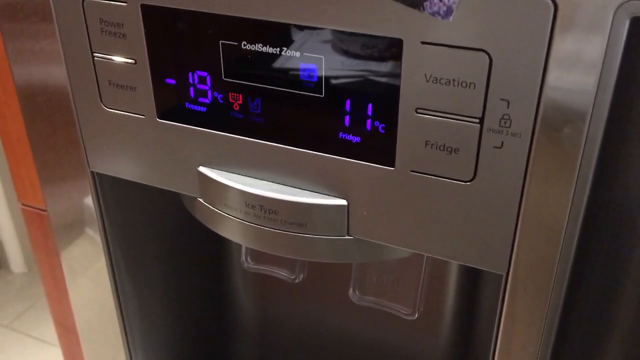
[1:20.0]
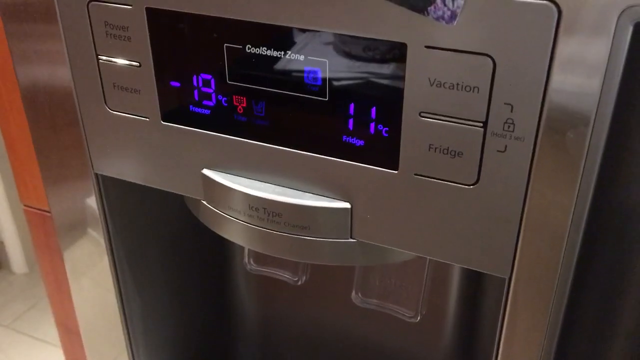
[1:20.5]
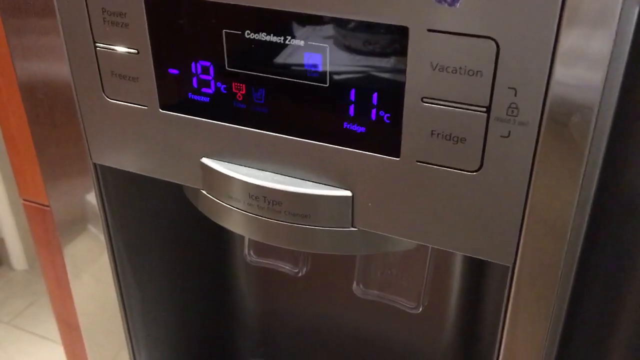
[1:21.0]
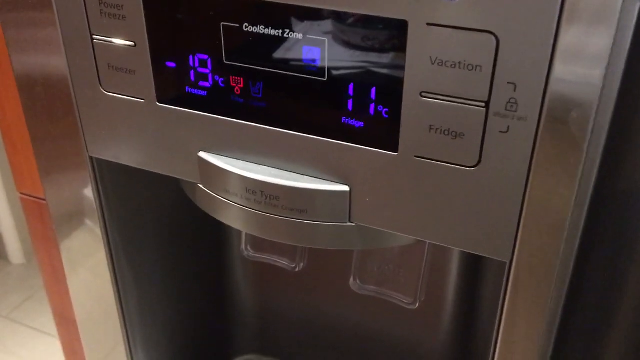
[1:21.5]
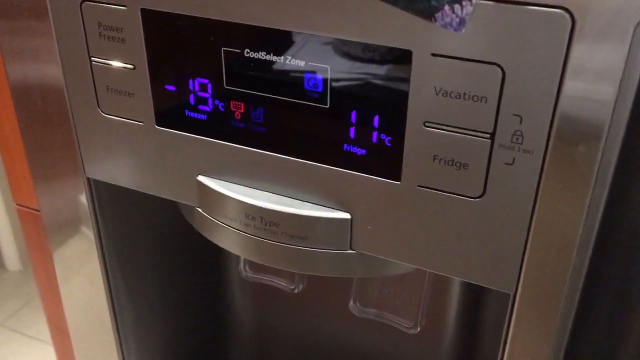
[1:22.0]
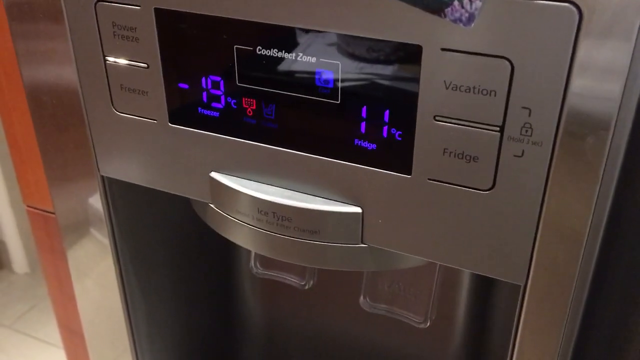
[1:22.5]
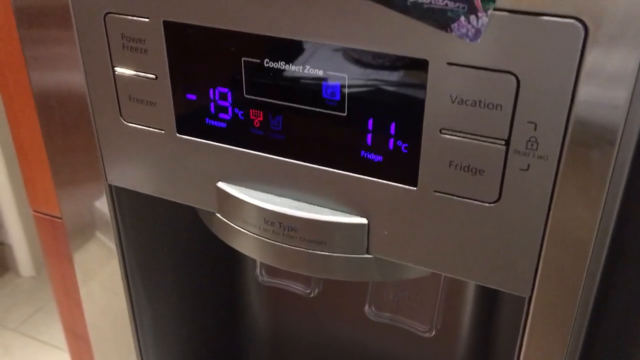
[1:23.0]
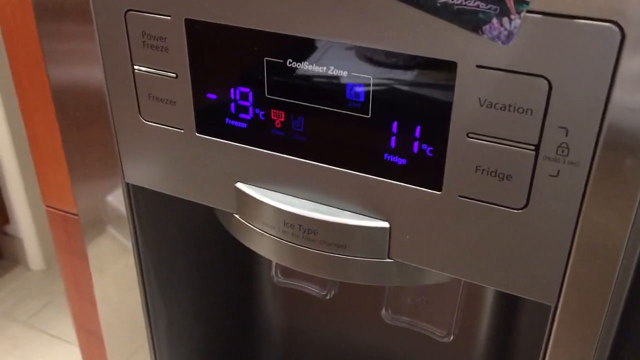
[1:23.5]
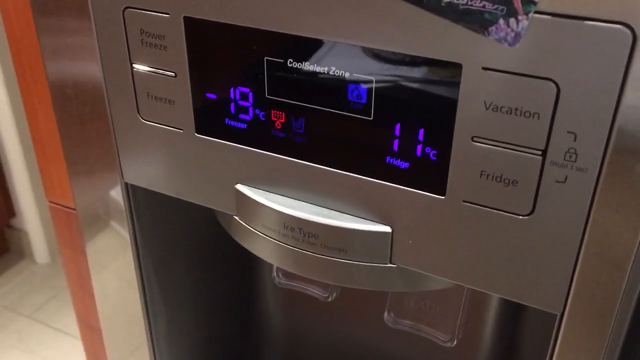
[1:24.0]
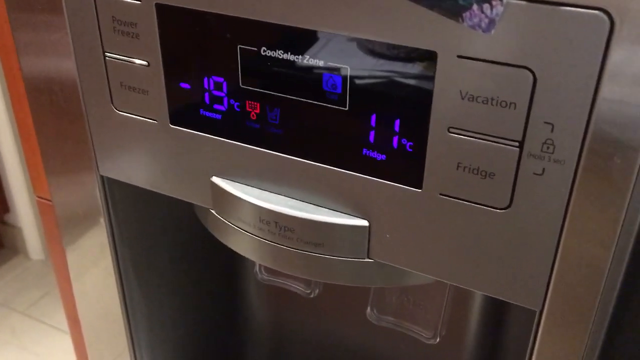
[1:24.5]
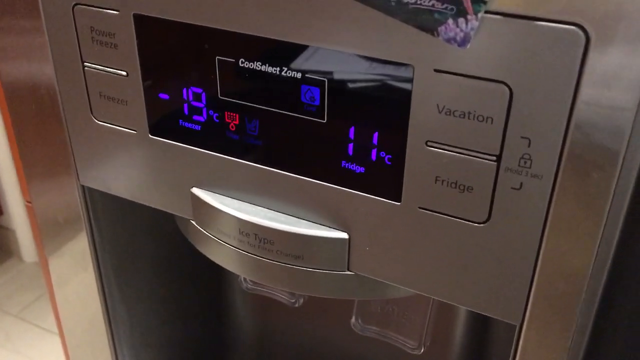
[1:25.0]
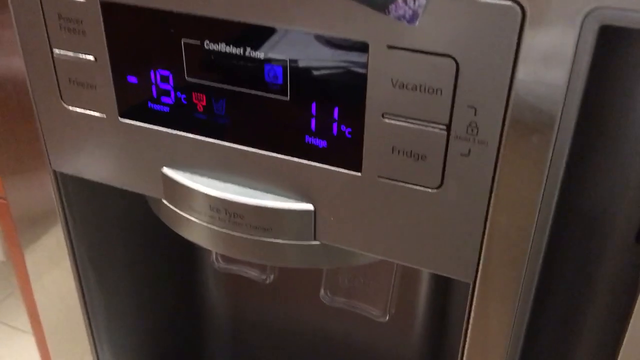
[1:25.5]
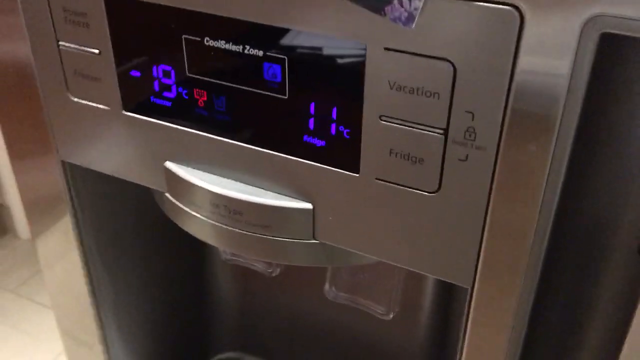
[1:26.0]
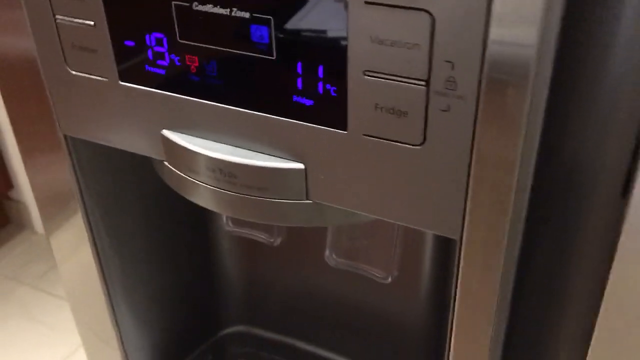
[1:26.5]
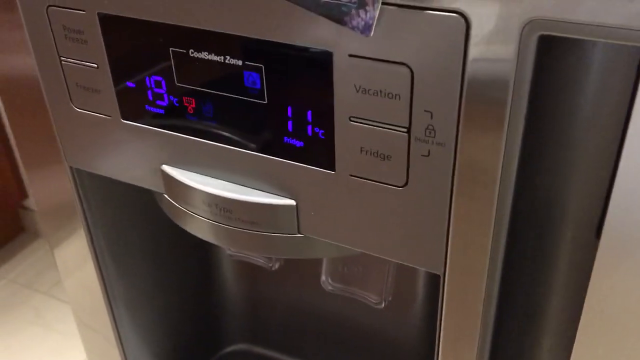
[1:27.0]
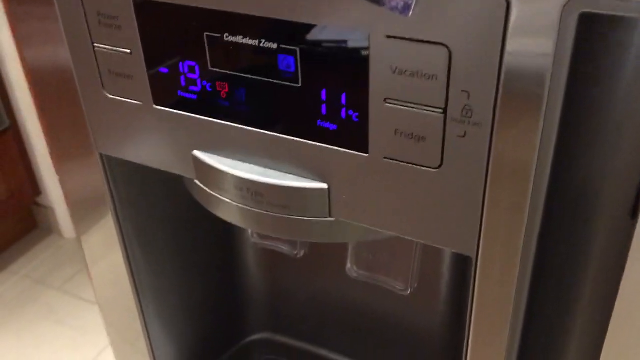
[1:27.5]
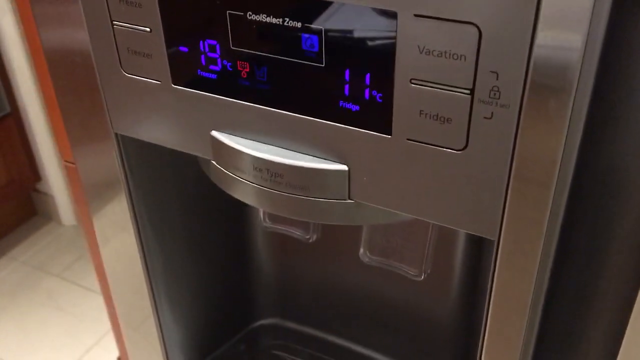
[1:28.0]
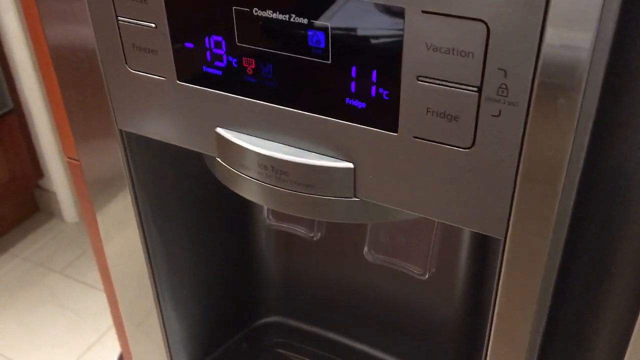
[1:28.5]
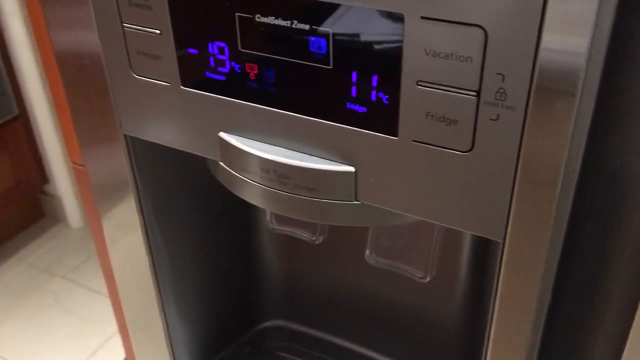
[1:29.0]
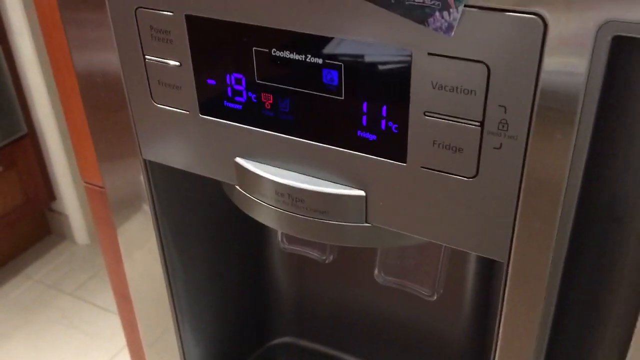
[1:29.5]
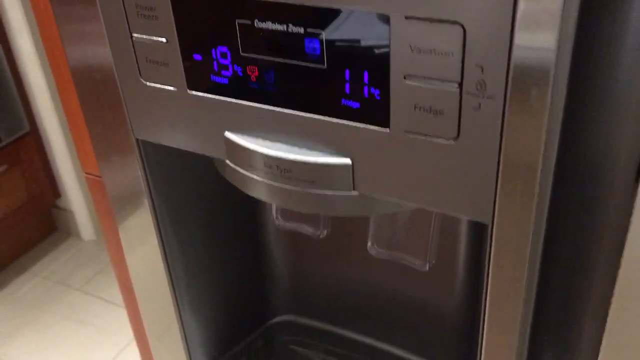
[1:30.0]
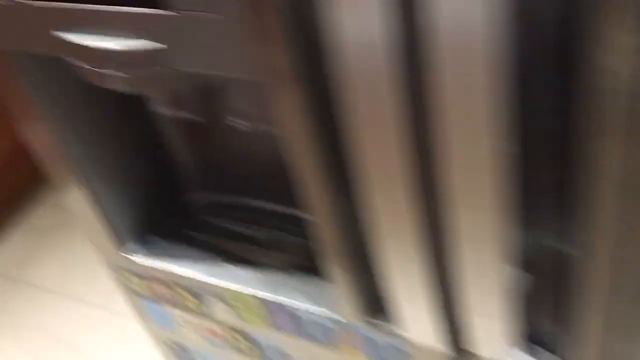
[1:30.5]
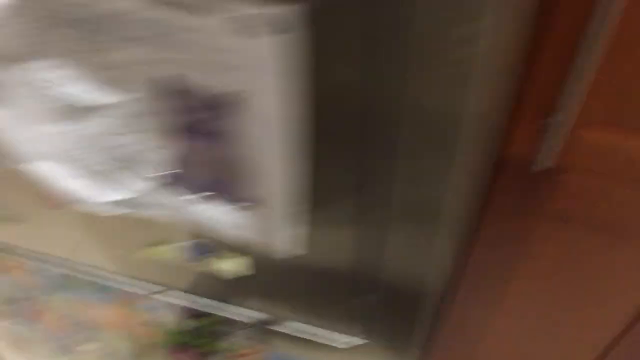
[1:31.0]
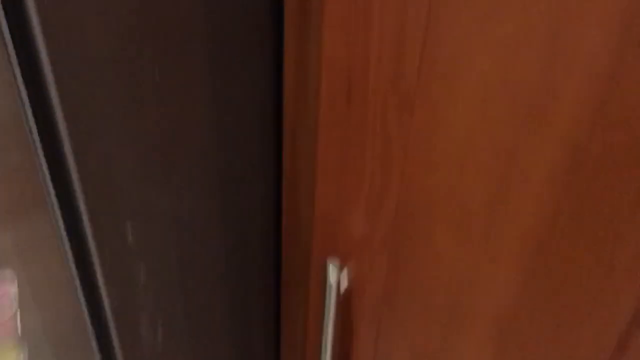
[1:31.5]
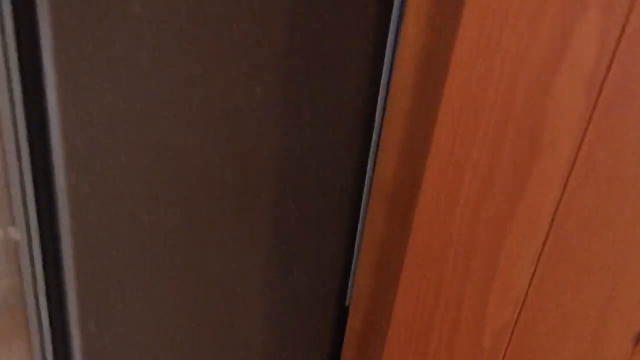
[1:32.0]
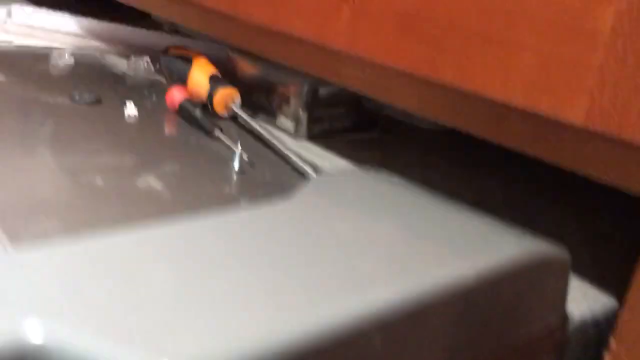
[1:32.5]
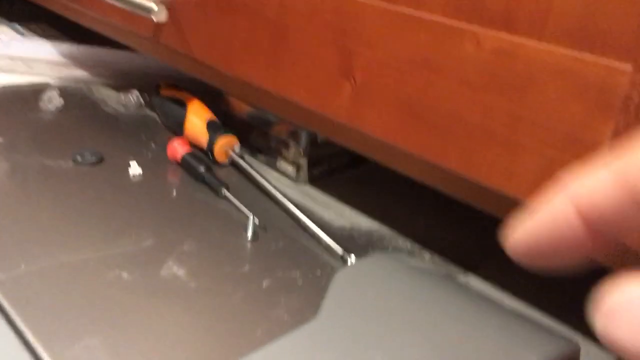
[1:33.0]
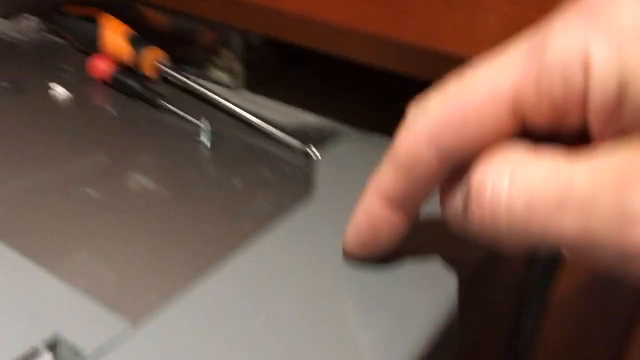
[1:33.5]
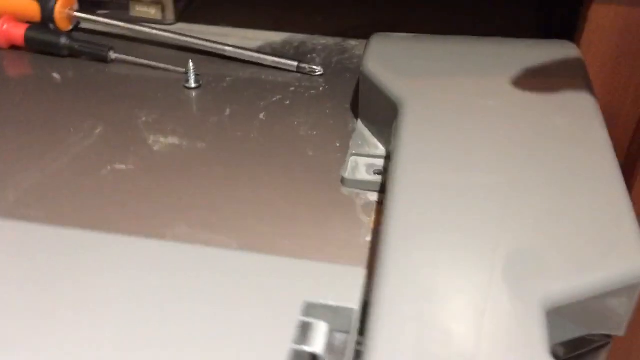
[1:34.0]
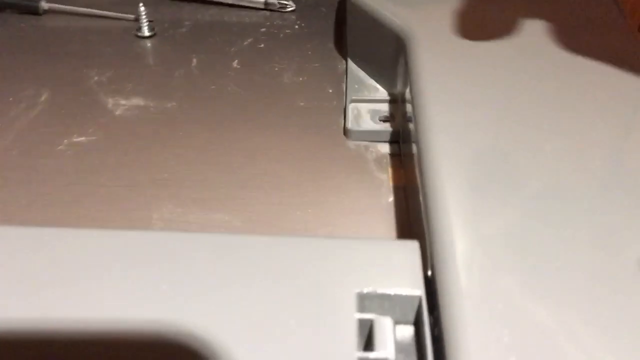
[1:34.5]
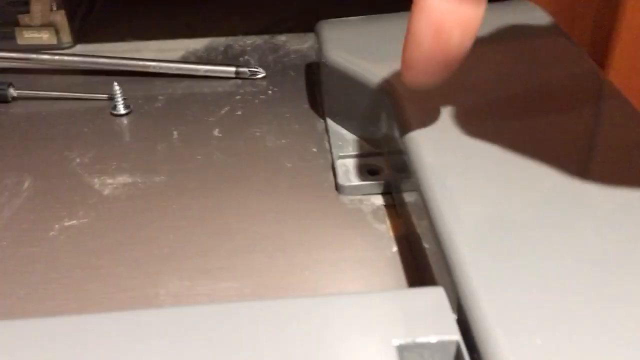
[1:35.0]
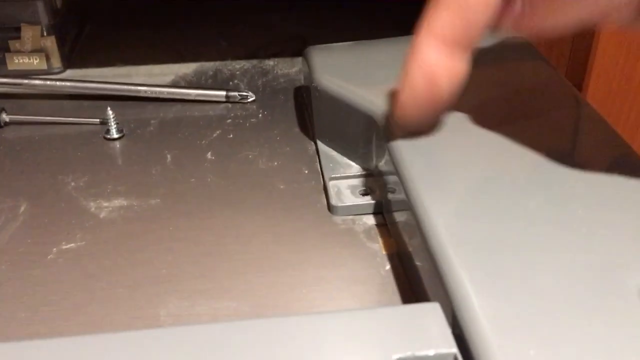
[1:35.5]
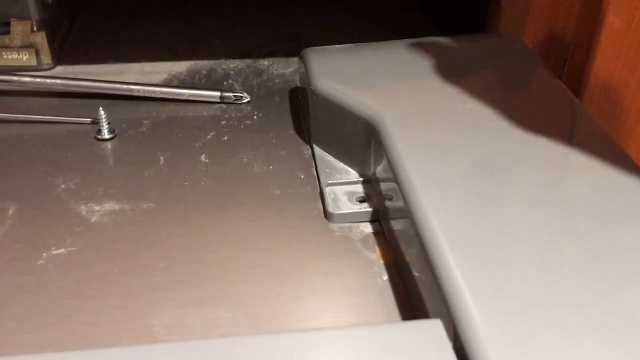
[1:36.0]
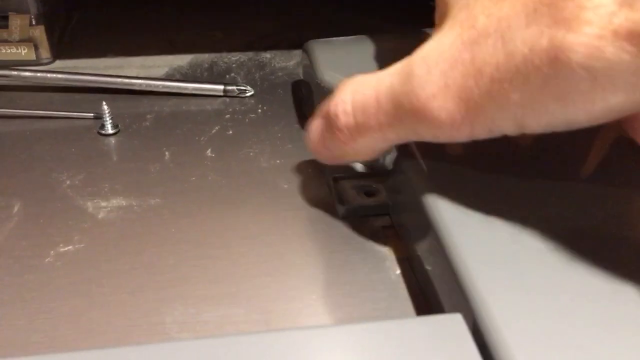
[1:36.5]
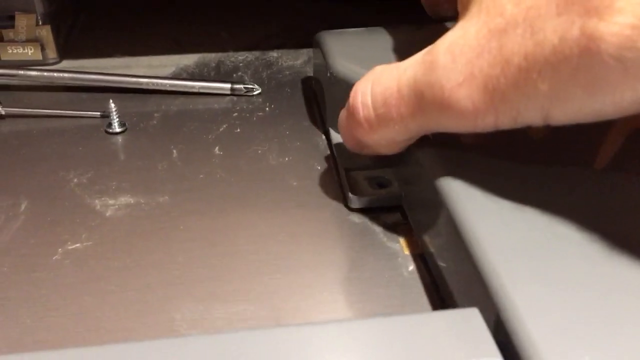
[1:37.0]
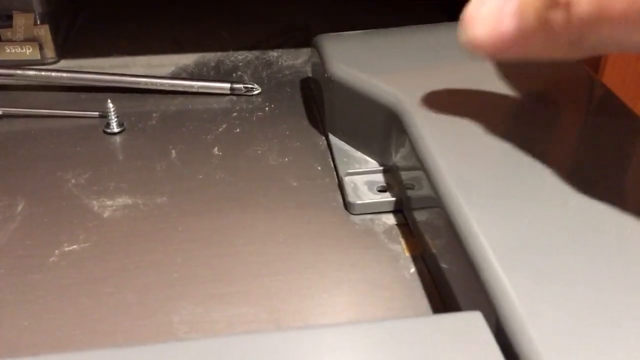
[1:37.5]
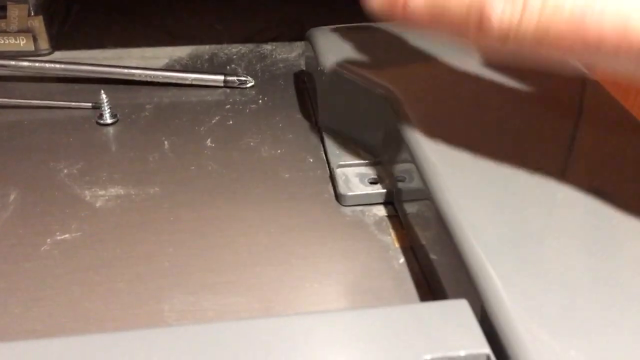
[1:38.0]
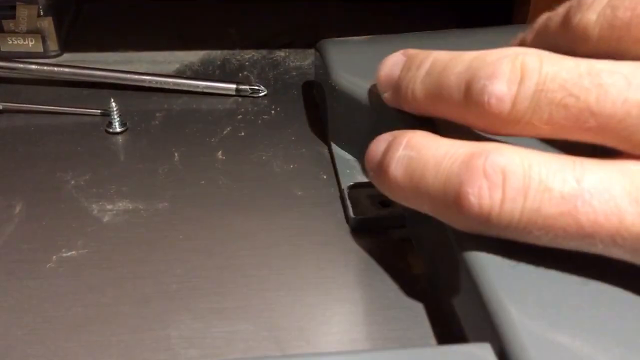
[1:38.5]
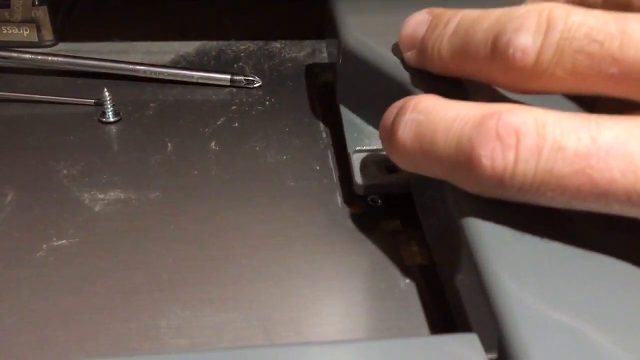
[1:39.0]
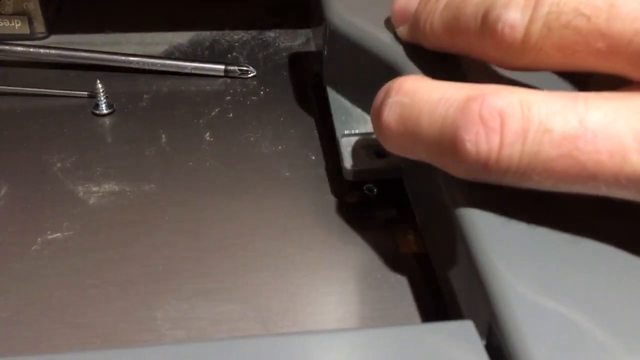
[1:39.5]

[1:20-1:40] The left-hand door of a two-door stainless steel fridge is shown up close in a slightly wide frame, so that mainly the ice maker is in view. There are two buttons each on the left and right, and in the center a black screen with lighting indicating the temperatures: negative 19 Celsius for the freezer on the left and 11 degrees Celsius for the fridge on the right. Just below the screen are two areas for getting ice and water. The camera then pans quickly to the right, past the right door to the right side of the fridge, goes up the side, and reaches the hinge on top of the door. There appears to be a piece of gray plastic there, and a hand comes in from the right and starts to jiggle it. On the left is a hole where a screw or some other fastening device would normally be, but it is absent. The hand belongs to a Caucasian person.